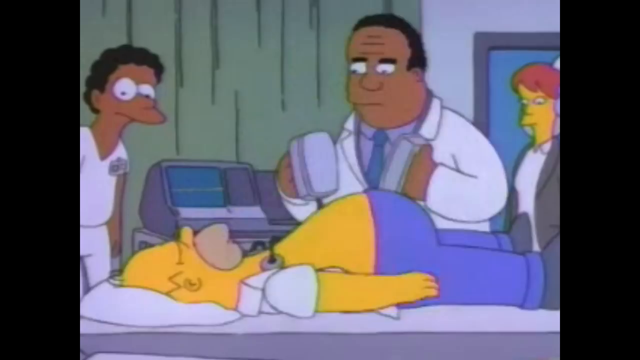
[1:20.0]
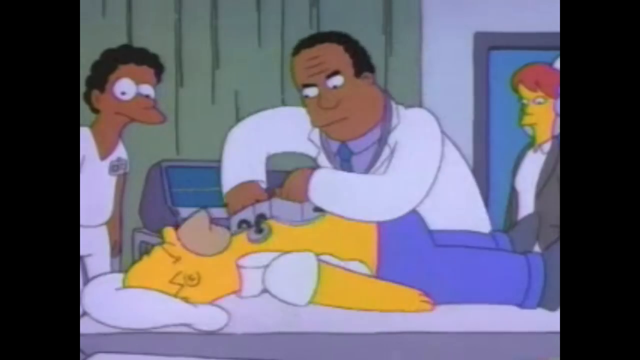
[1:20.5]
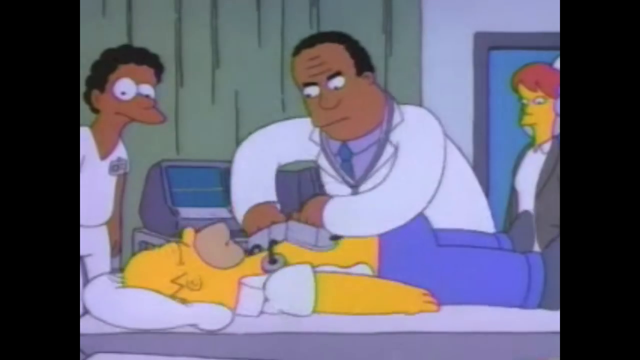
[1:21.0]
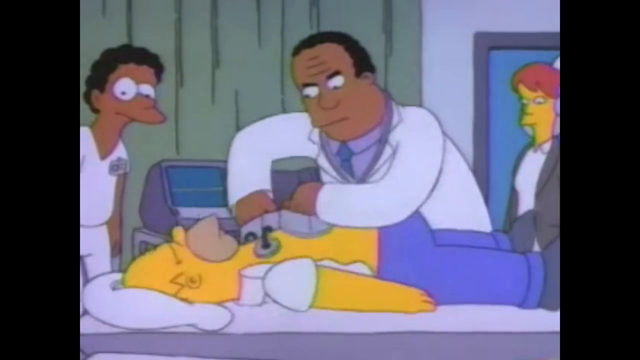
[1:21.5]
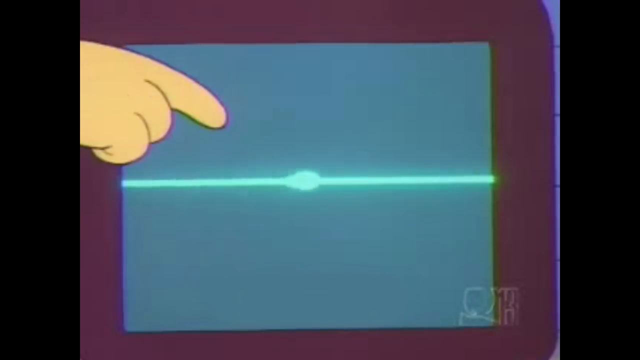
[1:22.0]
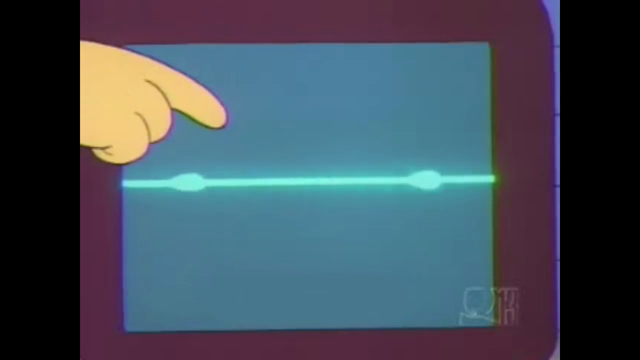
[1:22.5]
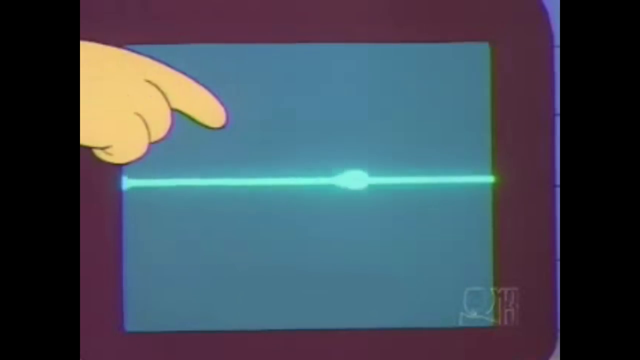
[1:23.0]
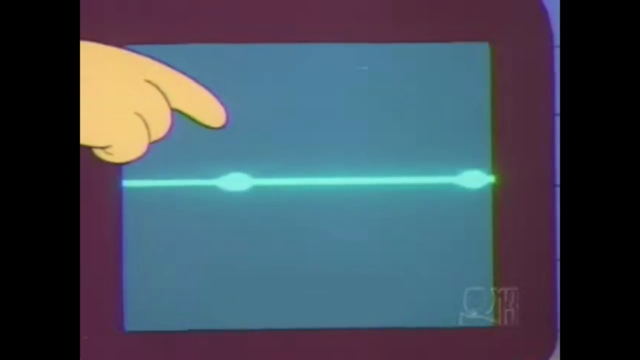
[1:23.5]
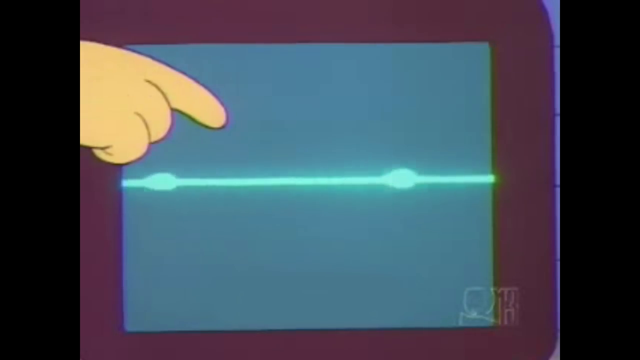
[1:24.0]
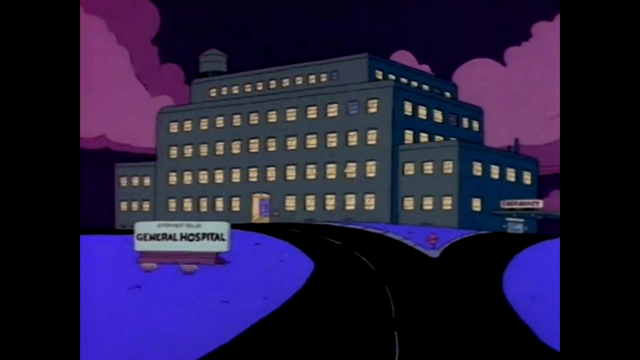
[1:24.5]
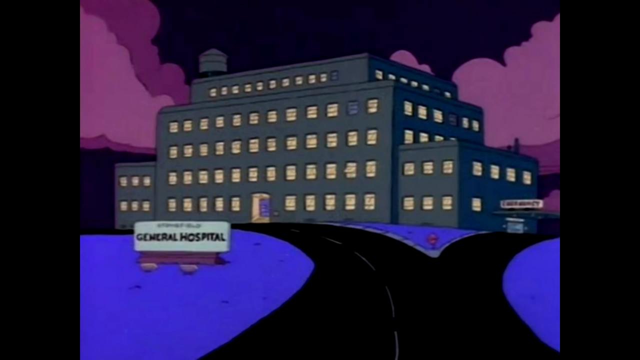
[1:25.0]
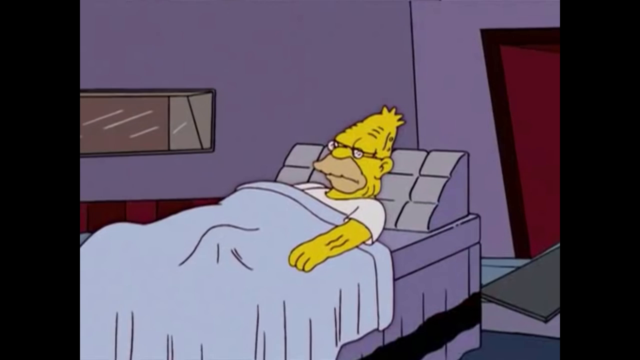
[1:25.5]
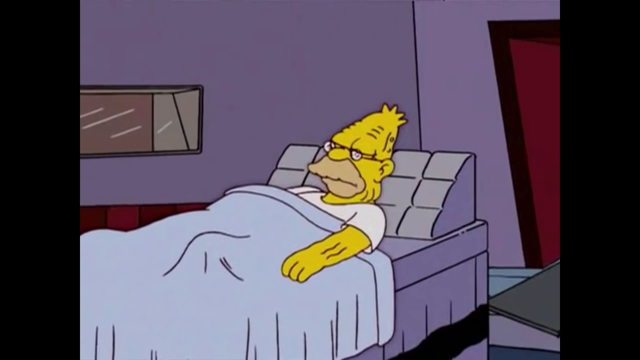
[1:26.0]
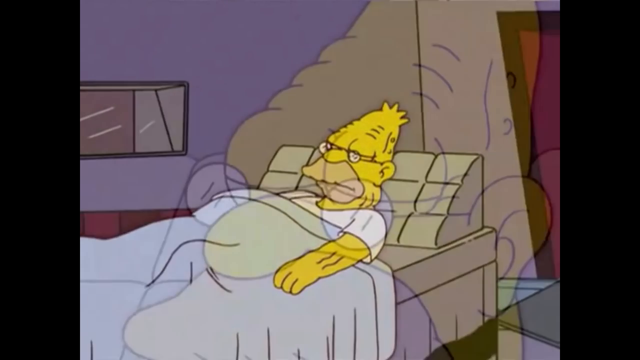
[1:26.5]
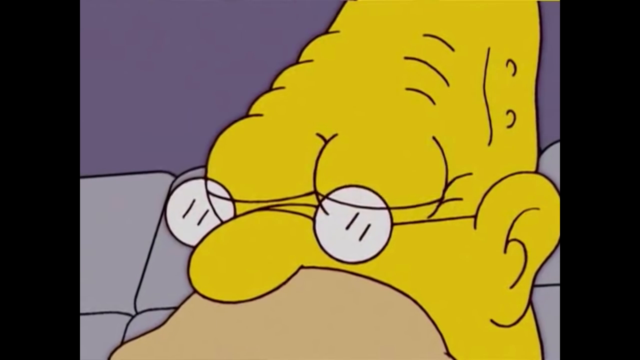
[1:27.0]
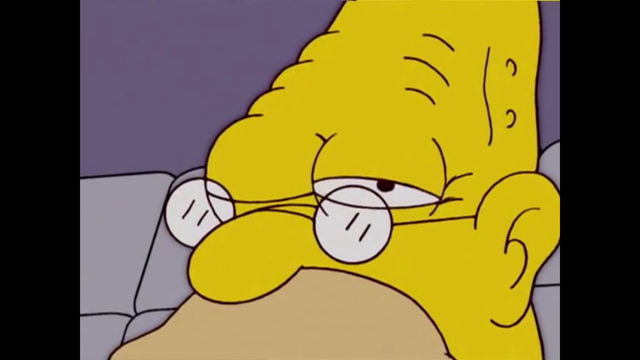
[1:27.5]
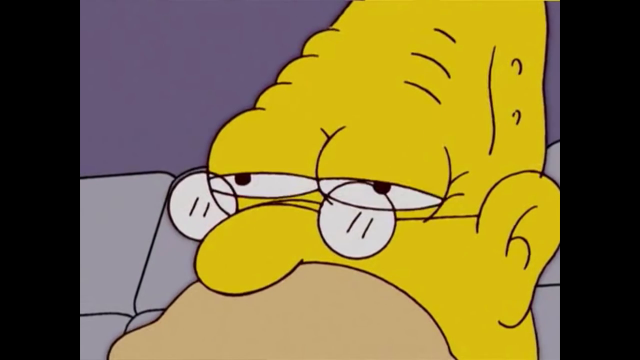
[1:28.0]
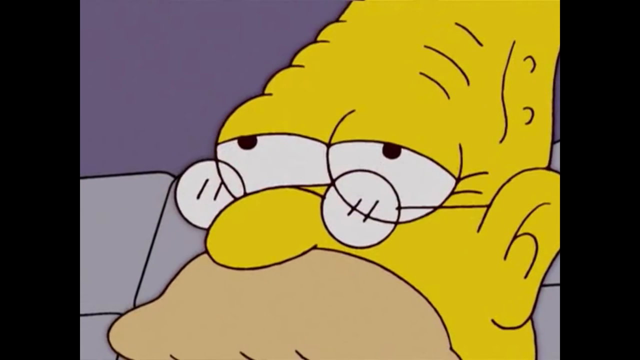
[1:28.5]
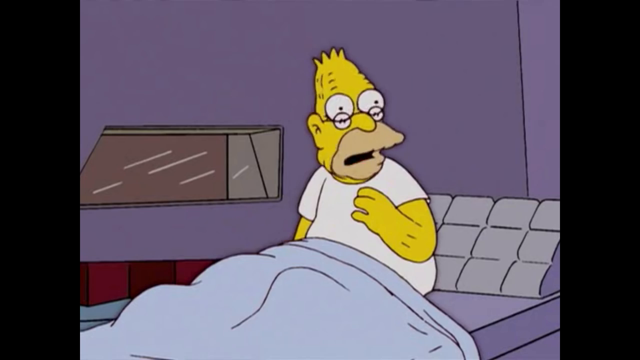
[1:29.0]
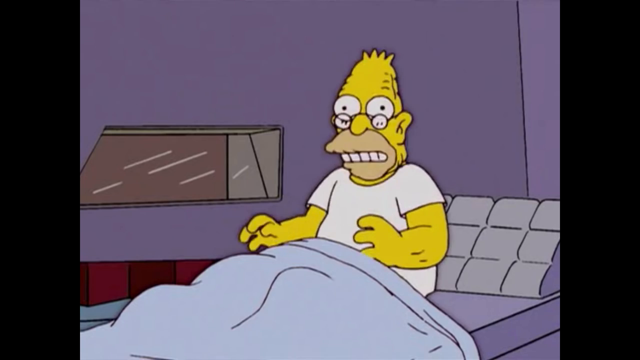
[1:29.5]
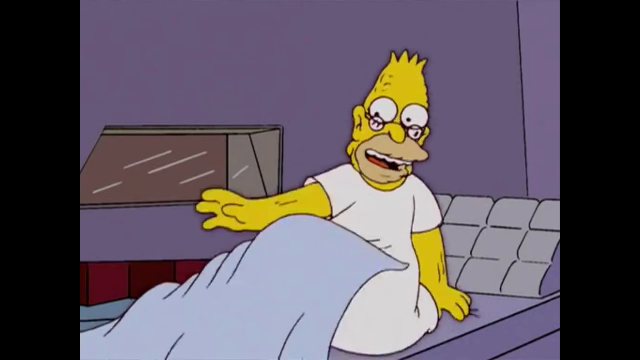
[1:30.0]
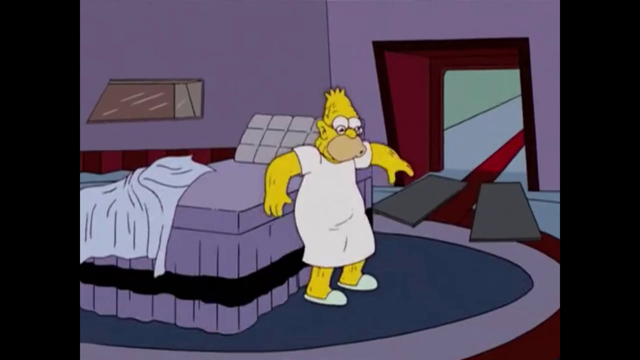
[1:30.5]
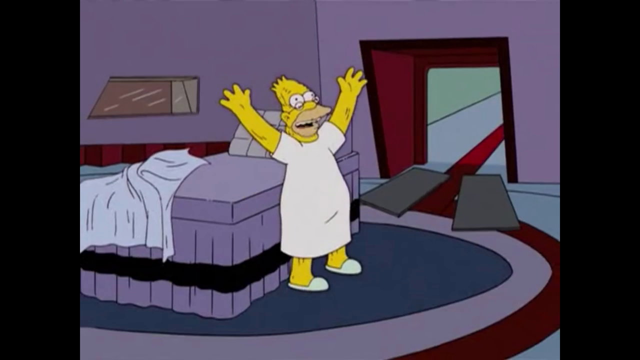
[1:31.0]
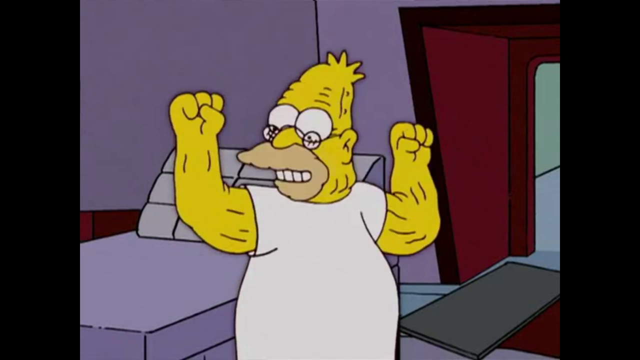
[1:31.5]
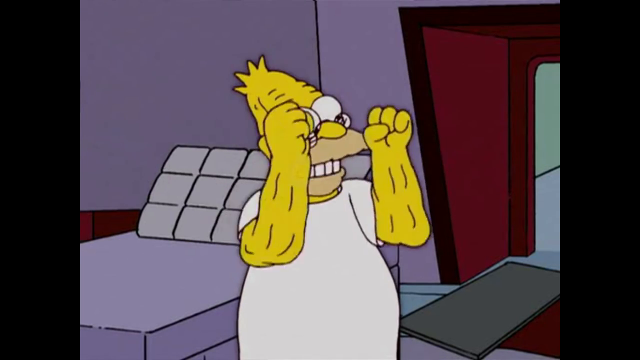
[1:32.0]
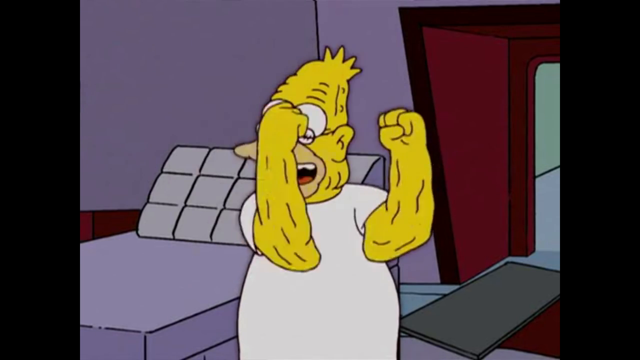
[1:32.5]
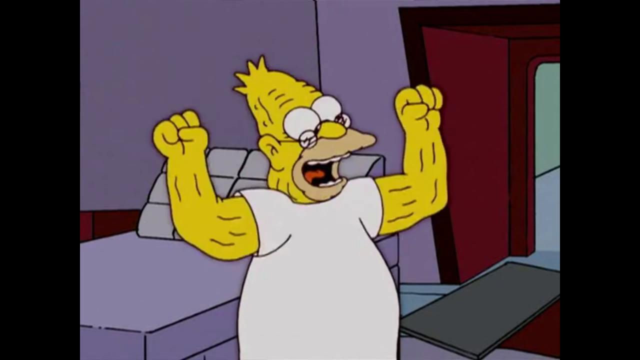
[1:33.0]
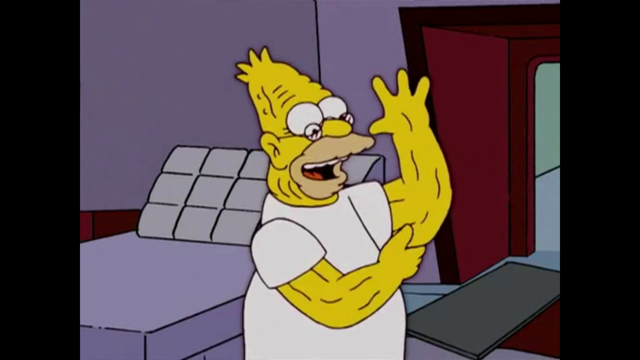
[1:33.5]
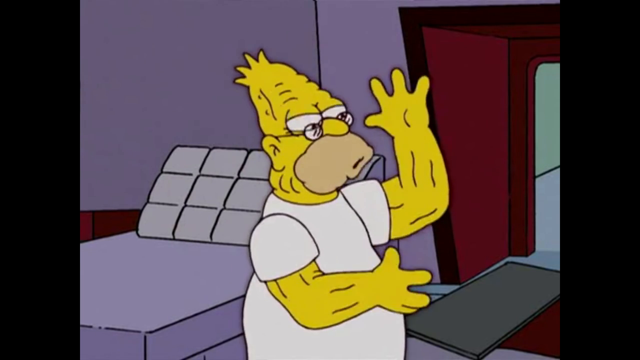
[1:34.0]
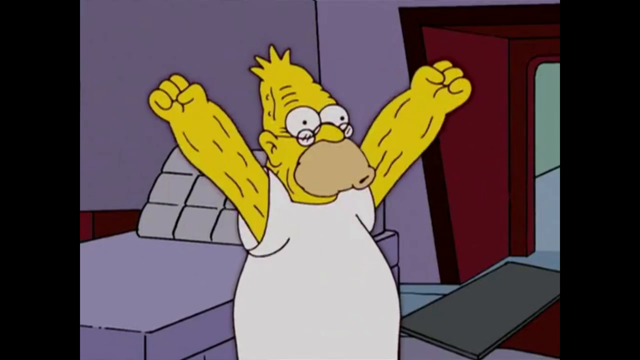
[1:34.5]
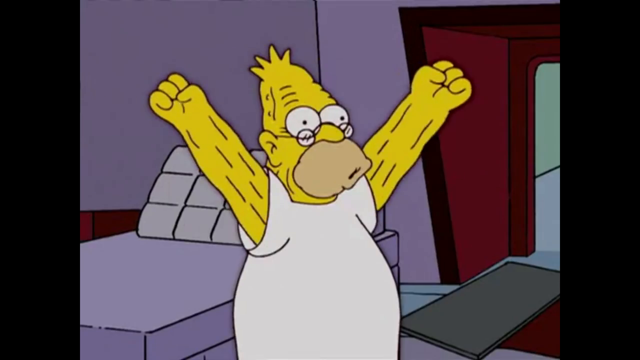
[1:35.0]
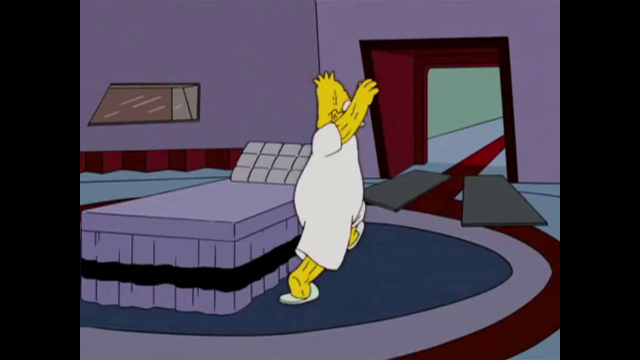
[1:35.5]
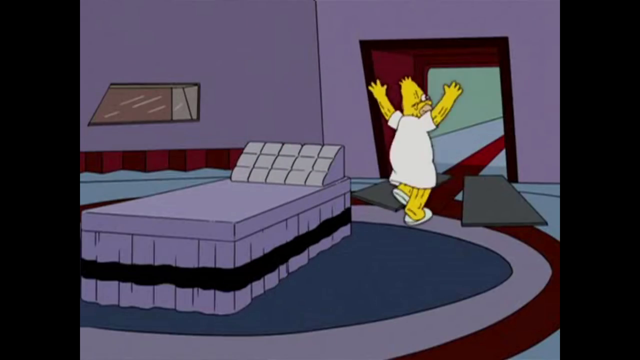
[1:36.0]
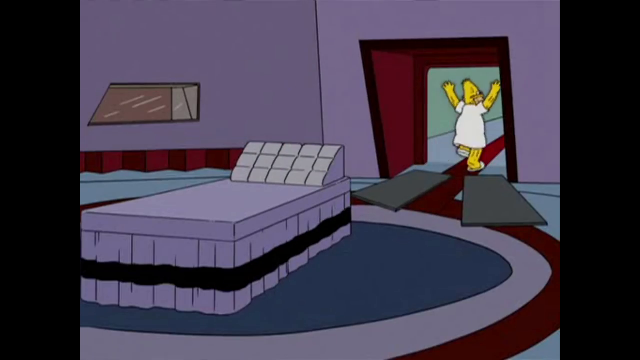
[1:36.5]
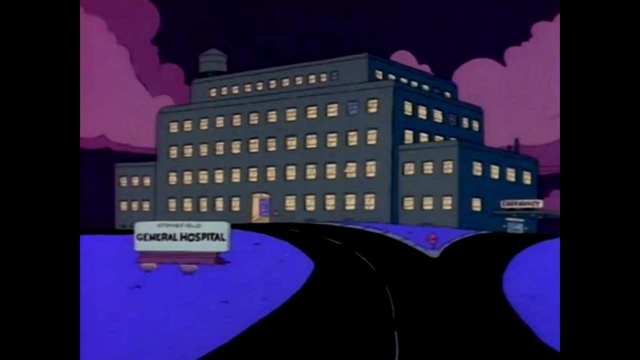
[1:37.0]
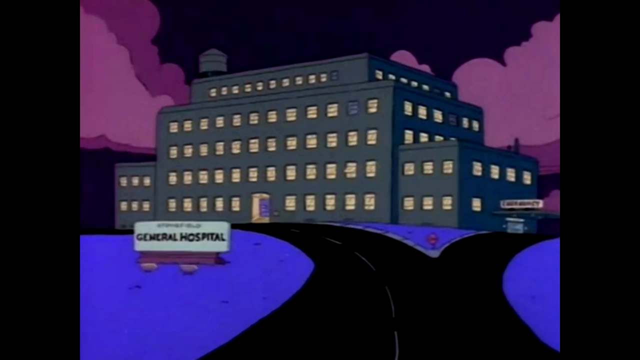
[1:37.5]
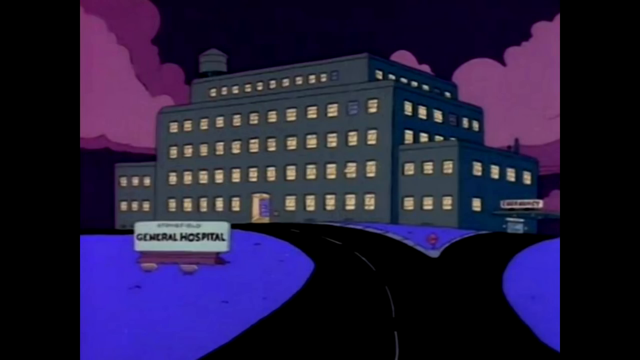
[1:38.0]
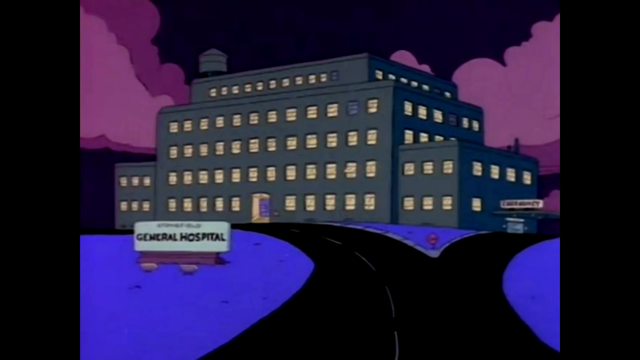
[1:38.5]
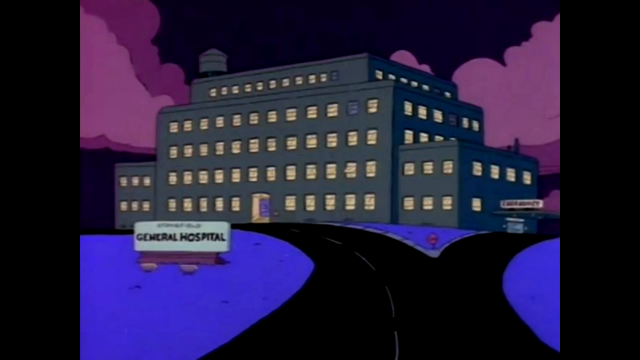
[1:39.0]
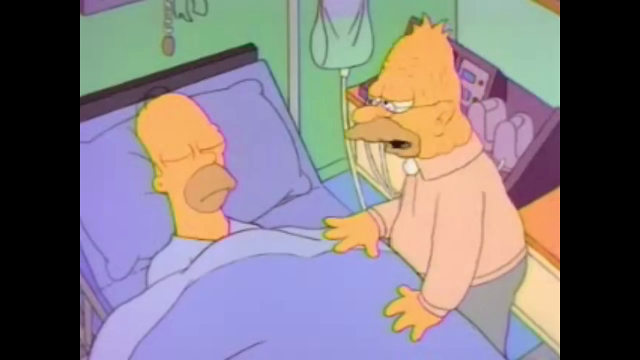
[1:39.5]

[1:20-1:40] Homer Simpson lies on the bed with his eyes closed and his arms down. A nurse looks down from his head toward his body, and a doctor stands beside him, looking from his waist toward his head, holding electric paddles to shock Homer back to life. A red-headed nurse stands in the doorway. The doctor leans in and shocks Homer, and each shock shows a dot on the monitor, but Homer never gets back up. Homer's father, however, feels much better: he jumps out of bed feeling like a young man again. He runs in to tell Homer, but Homer is still unconscious.